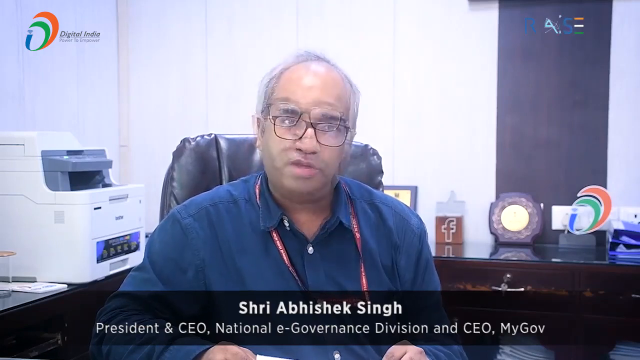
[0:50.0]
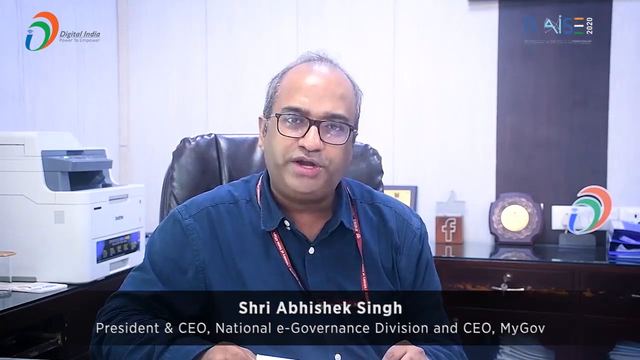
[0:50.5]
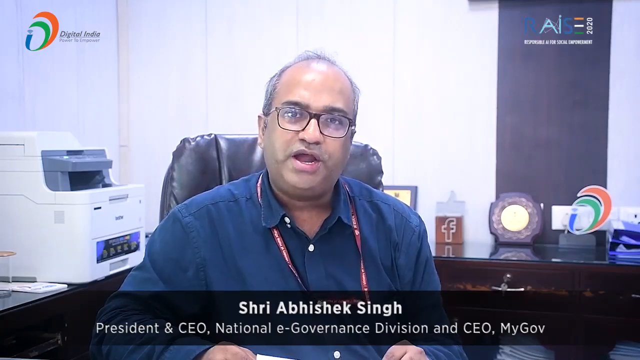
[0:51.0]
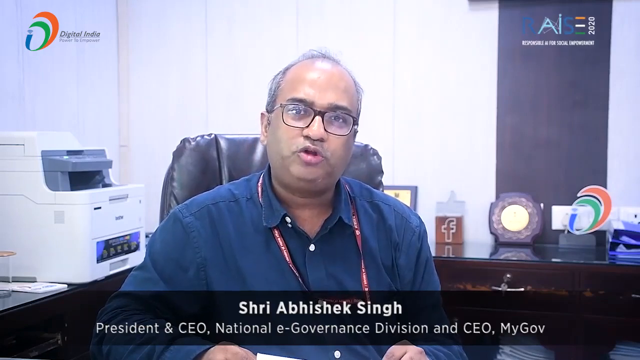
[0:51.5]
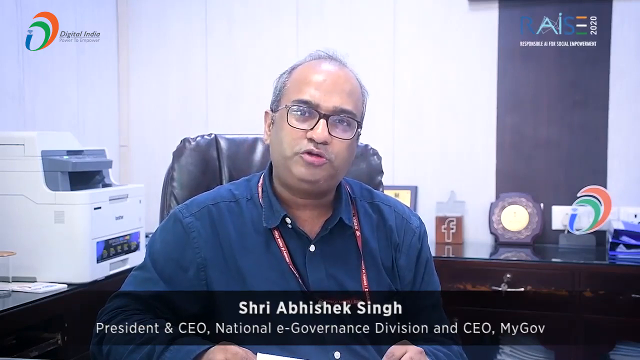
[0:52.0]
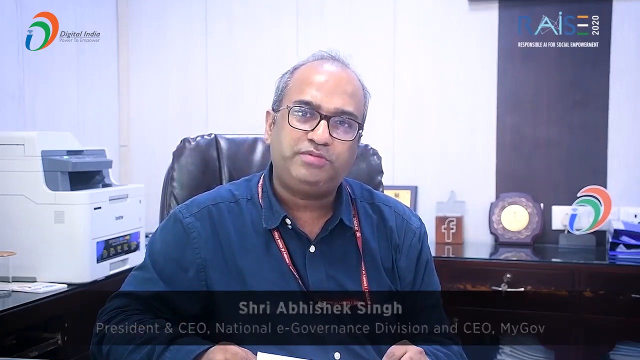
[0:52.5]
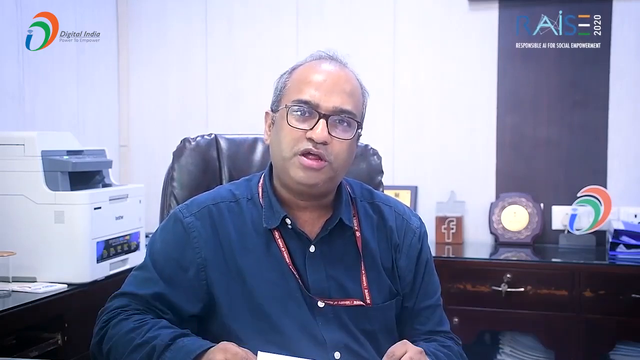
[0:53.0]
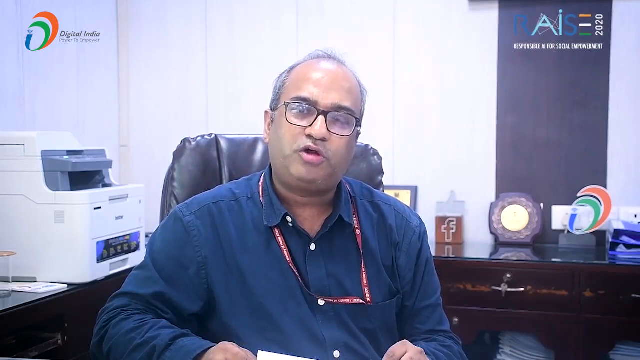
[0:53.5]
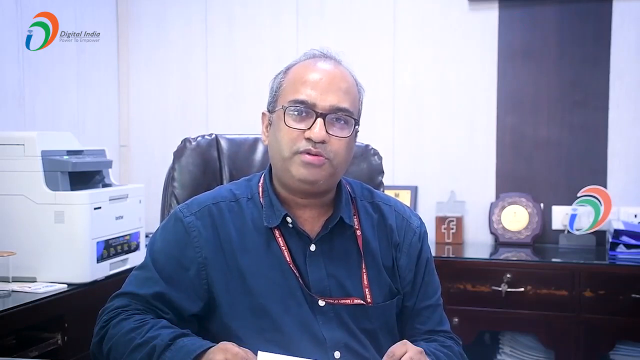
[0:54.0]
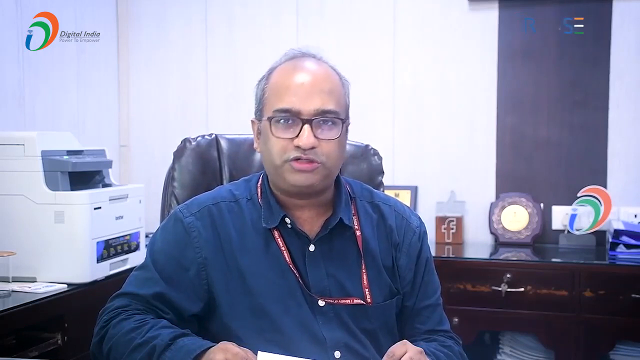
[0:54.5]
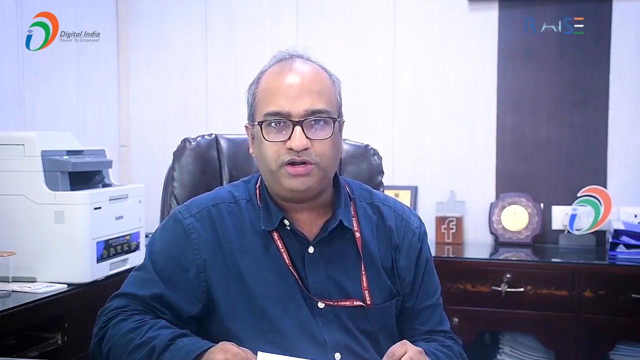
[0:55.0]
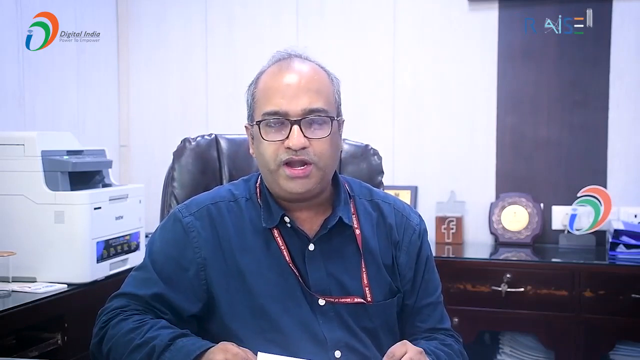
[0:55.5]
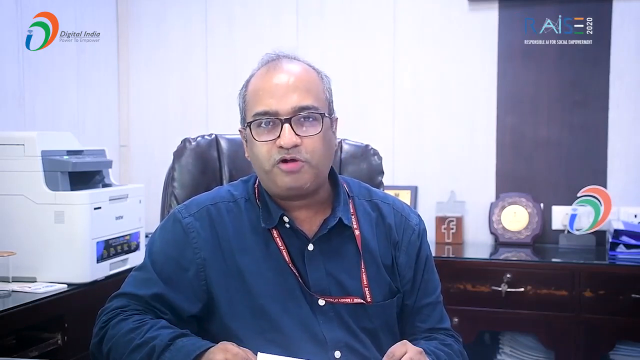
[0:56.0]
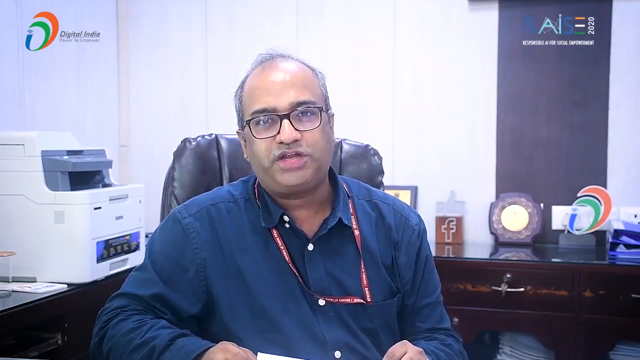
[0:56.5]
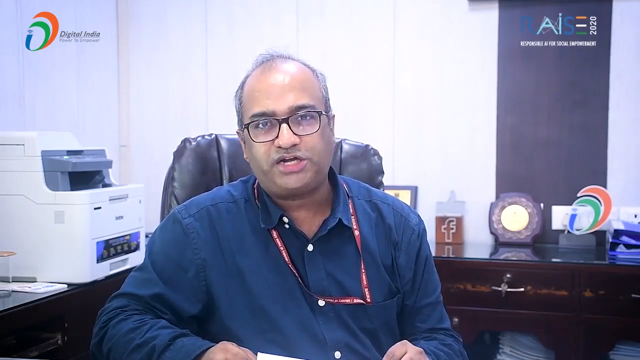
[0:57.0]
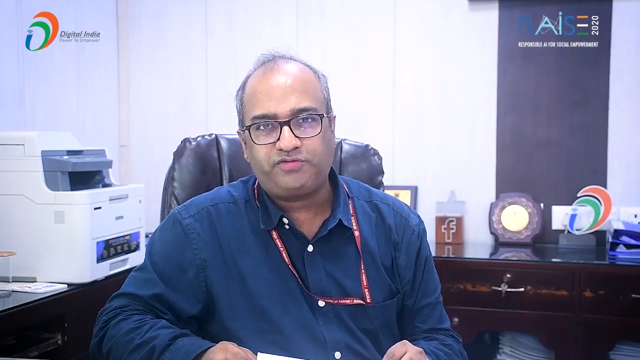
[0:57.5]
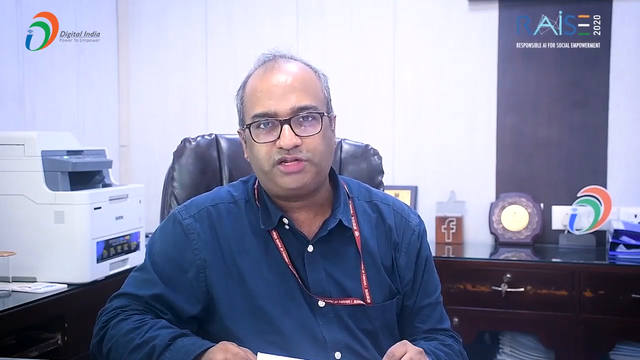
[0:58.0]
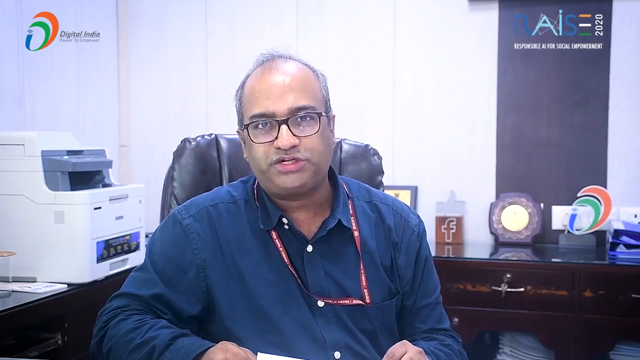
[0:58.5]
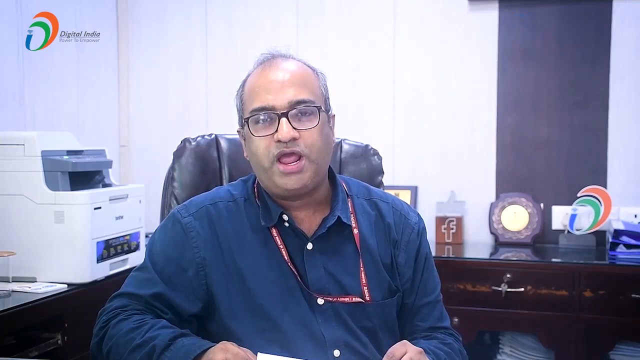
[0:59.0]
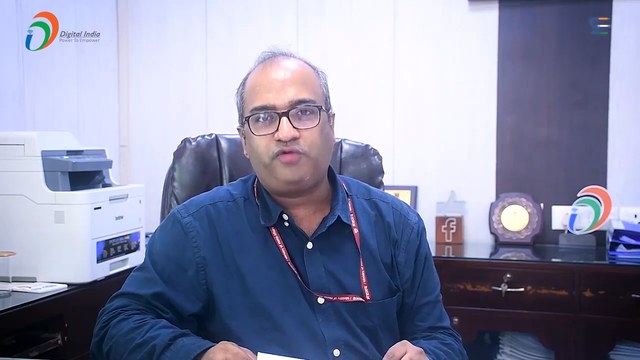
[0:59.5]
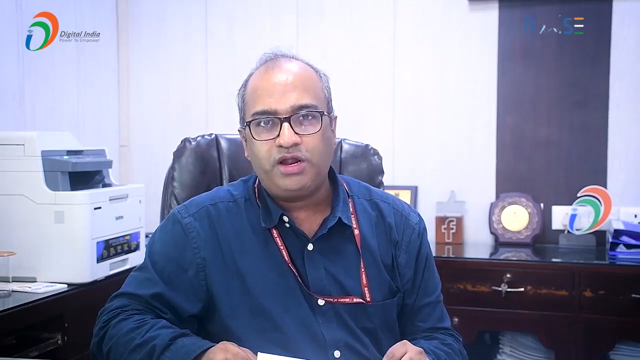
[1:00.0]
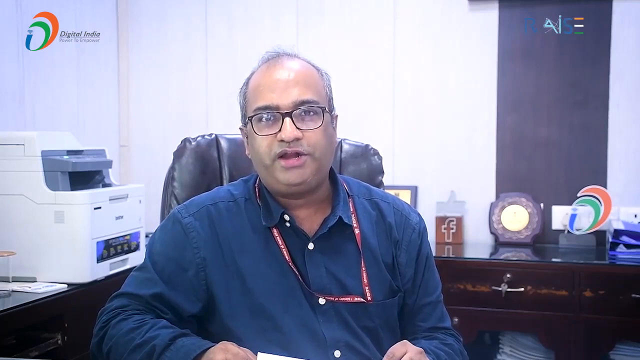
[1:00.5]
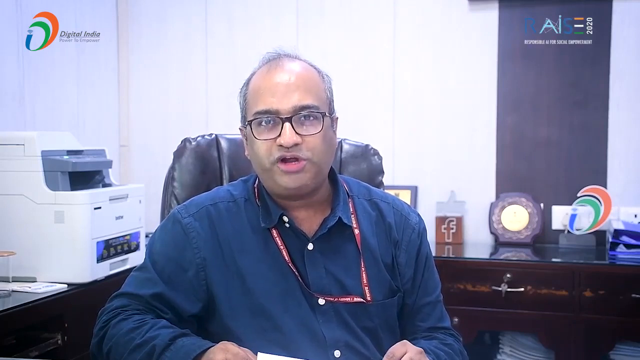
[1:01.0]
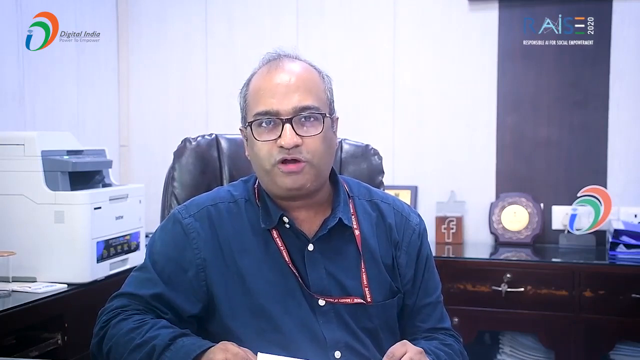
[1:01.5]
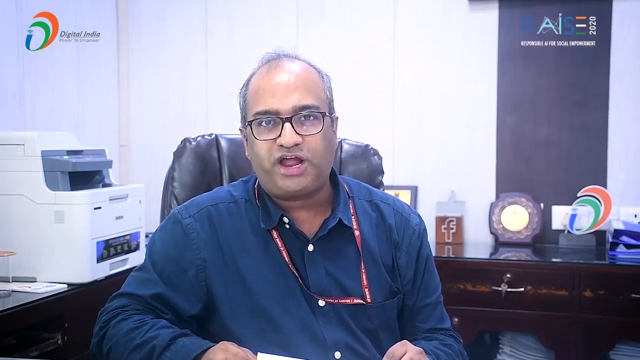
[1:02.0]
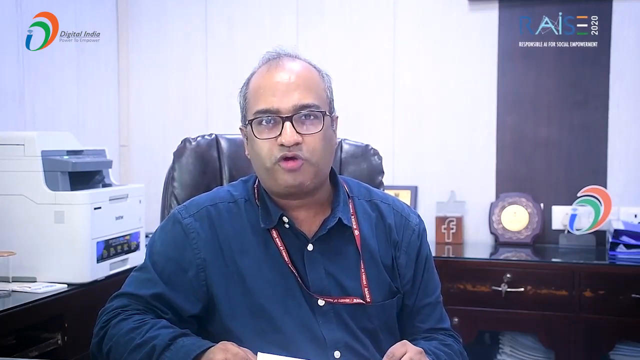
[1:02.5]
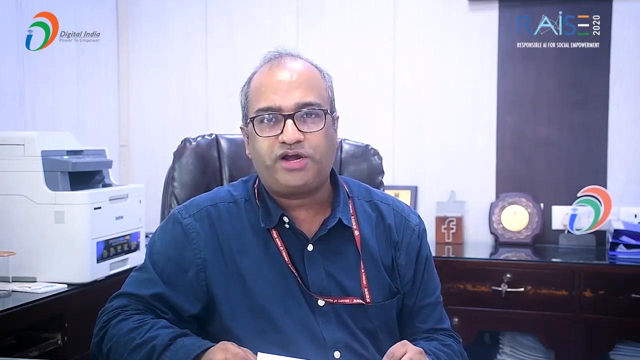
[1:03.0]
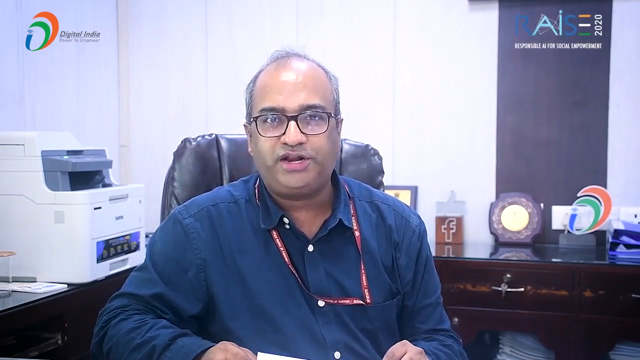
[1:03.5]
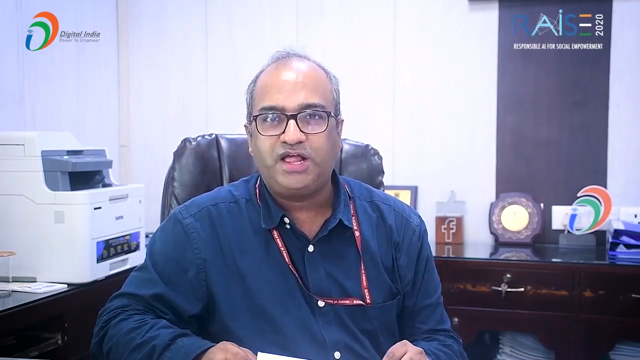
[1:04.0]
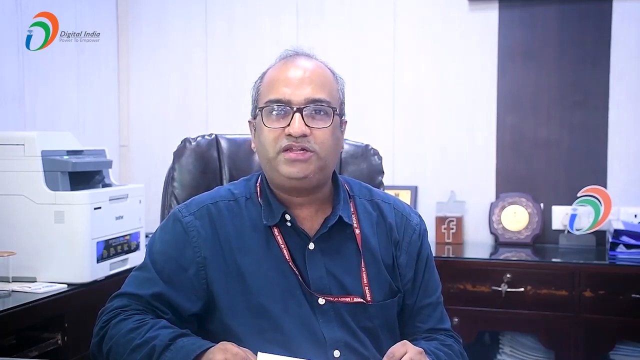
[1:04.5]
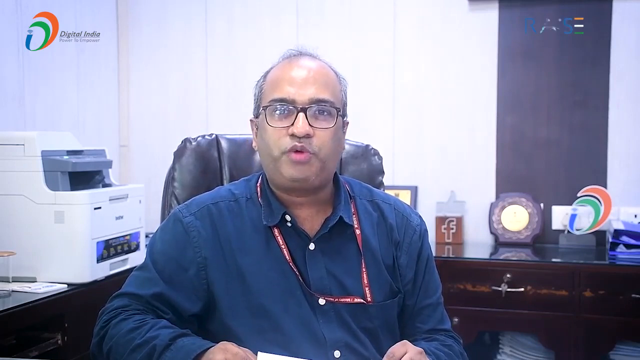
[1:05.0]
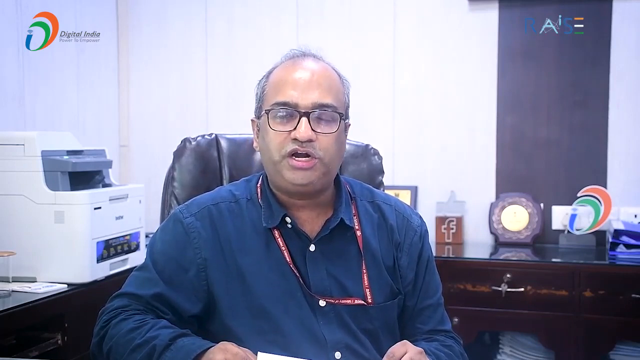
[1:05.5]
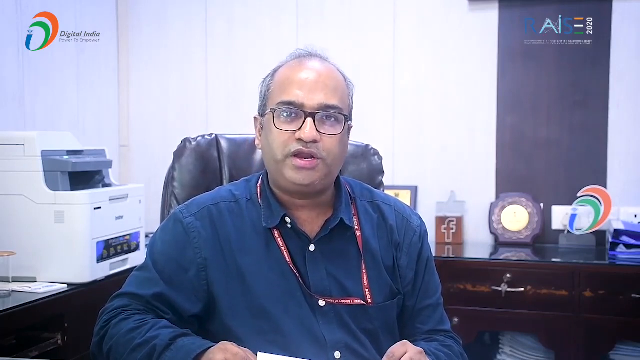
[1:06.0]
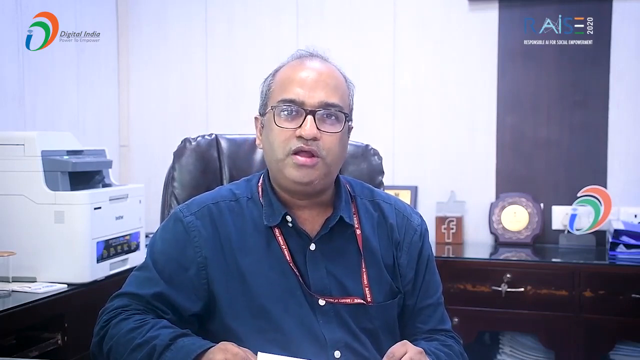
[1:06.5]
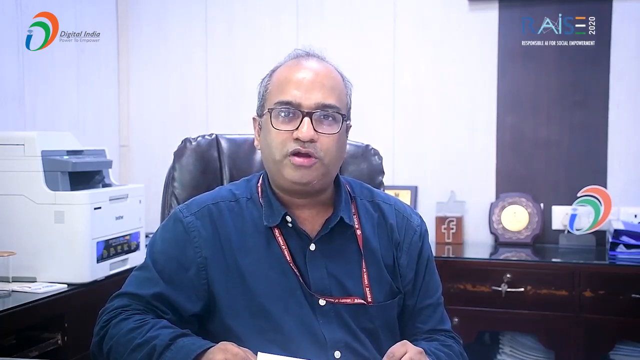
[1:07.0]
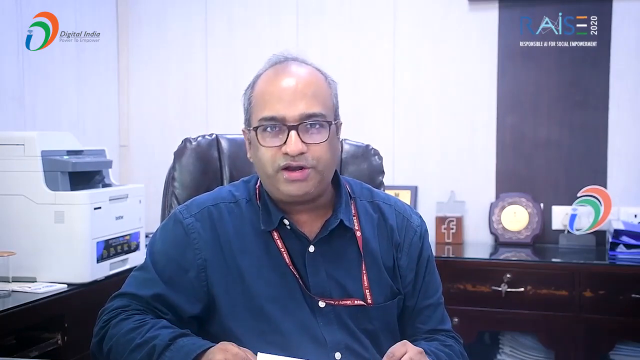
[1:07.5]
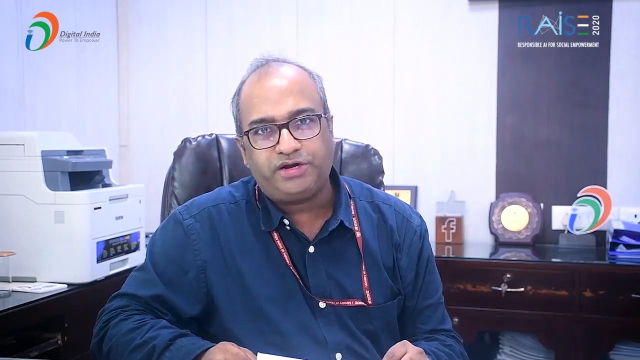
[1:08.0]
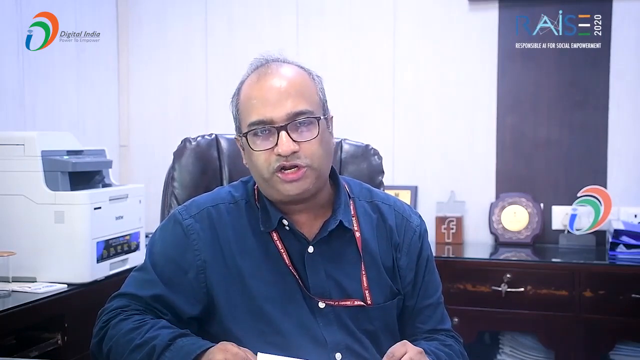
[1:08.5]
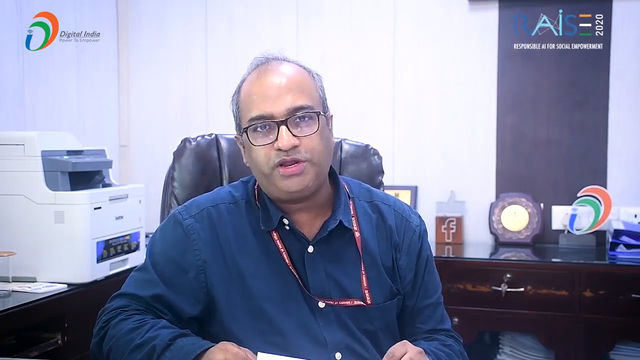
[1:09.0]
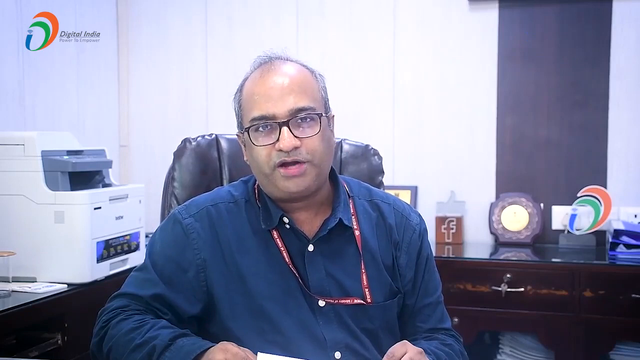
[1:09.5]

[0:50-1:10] The summit takes place in India, where Shri Abshnek Singh, President and CEO of National E-Government Division, is present.